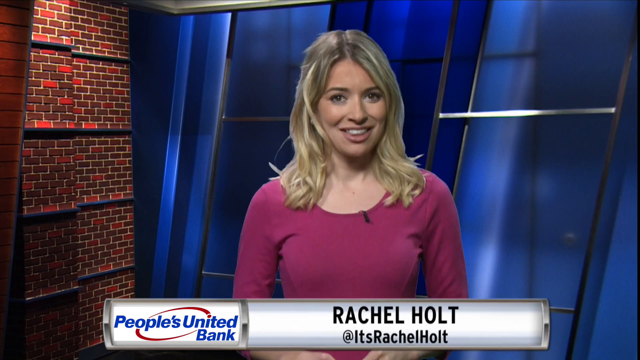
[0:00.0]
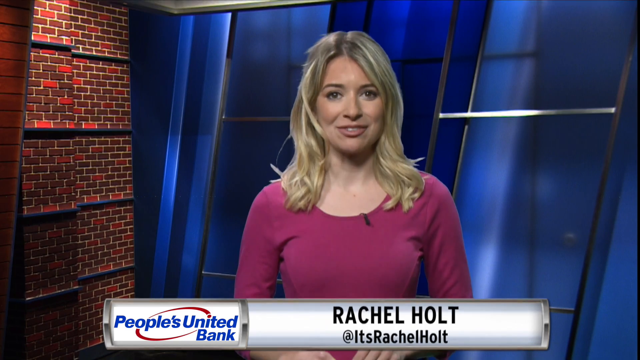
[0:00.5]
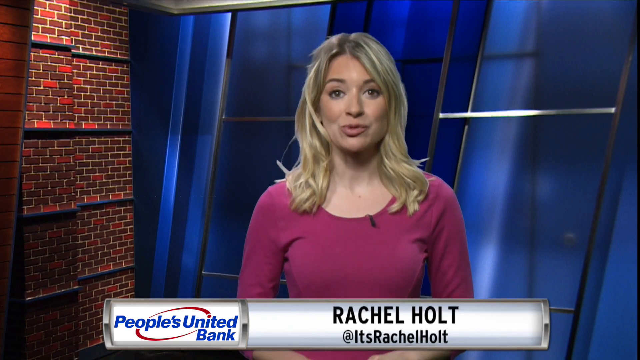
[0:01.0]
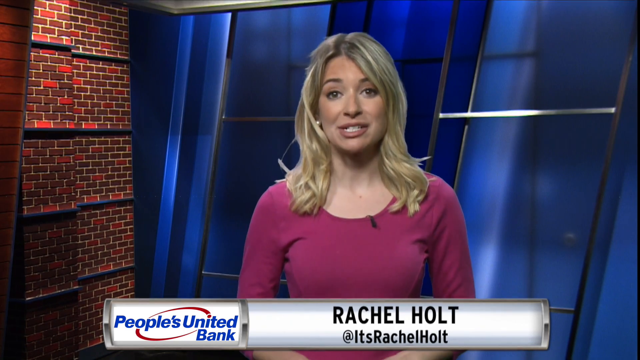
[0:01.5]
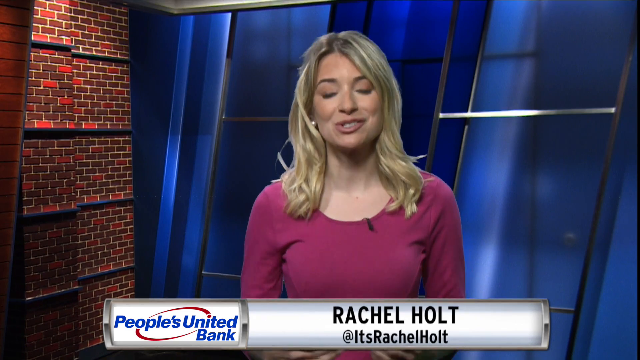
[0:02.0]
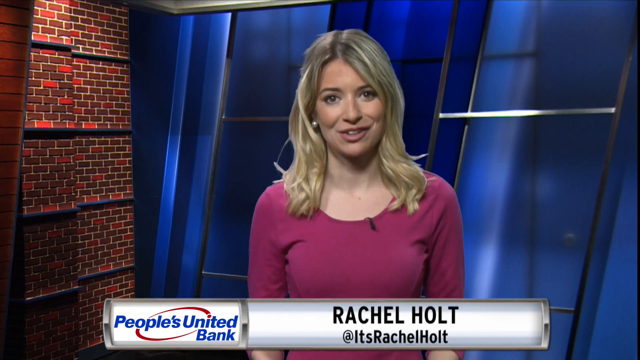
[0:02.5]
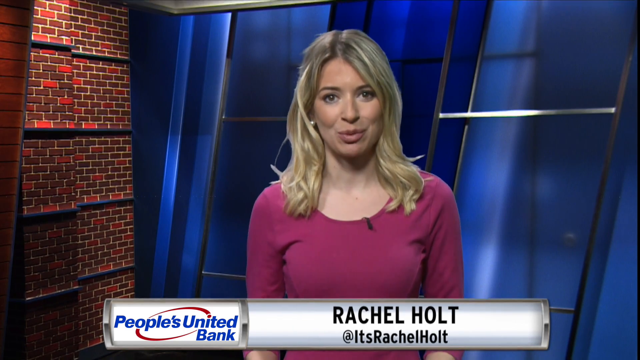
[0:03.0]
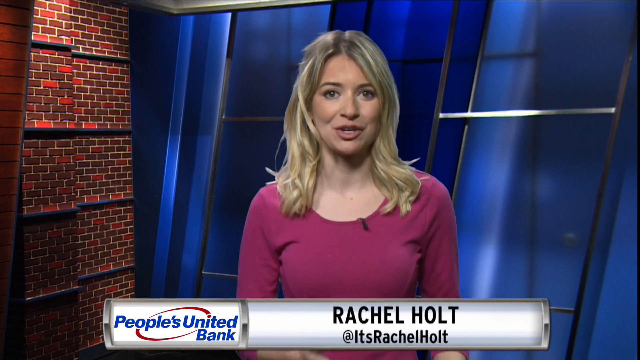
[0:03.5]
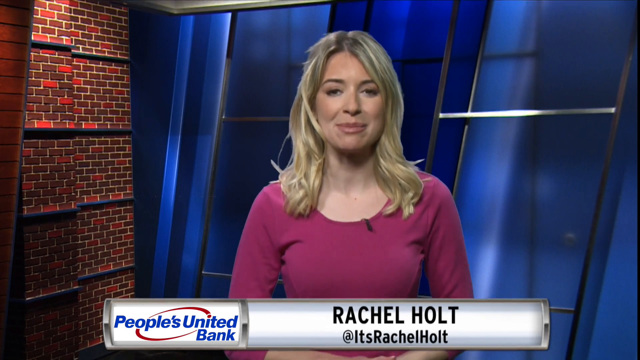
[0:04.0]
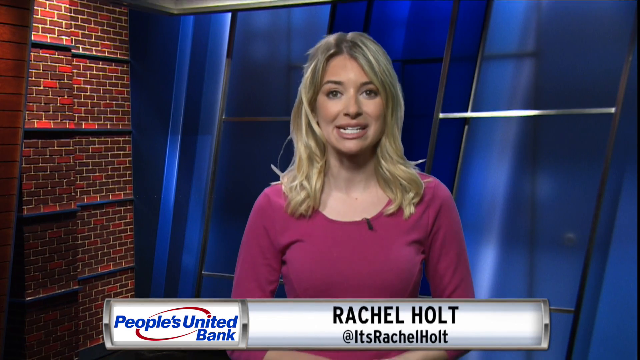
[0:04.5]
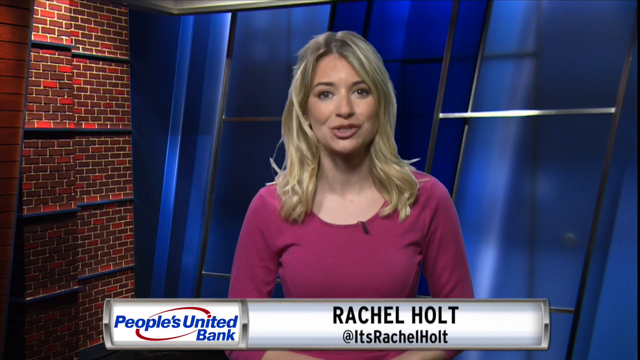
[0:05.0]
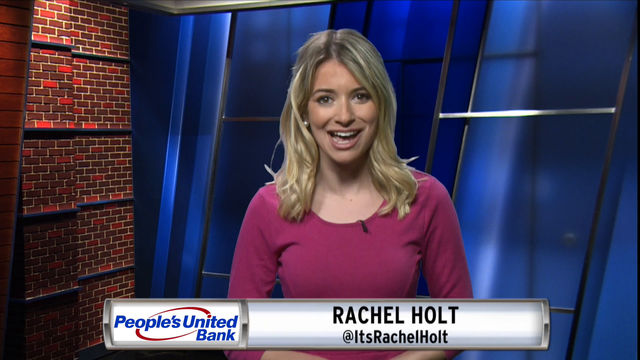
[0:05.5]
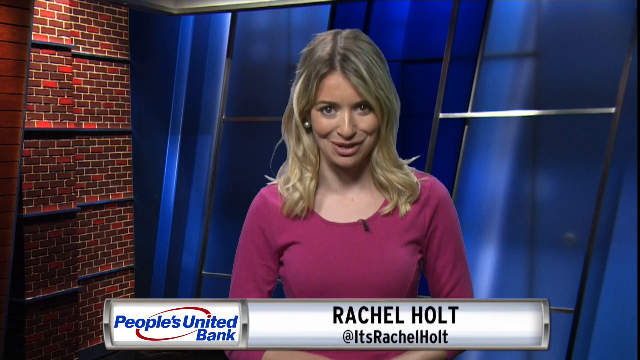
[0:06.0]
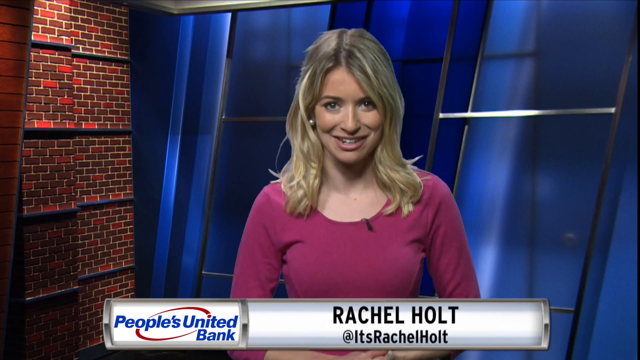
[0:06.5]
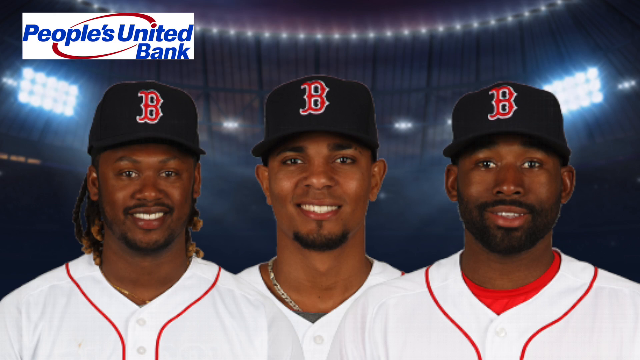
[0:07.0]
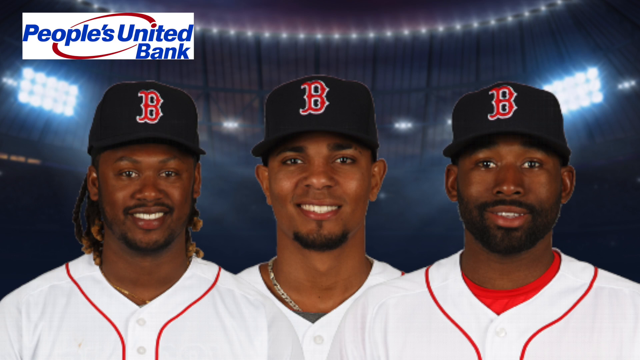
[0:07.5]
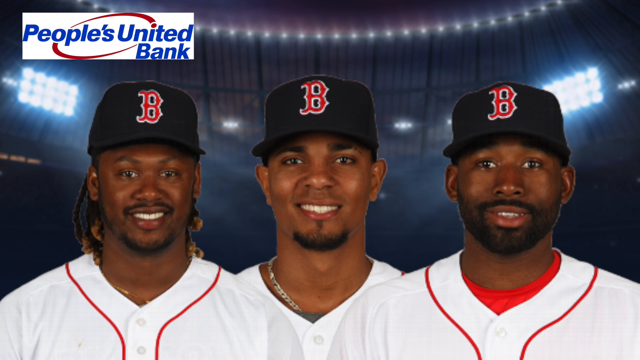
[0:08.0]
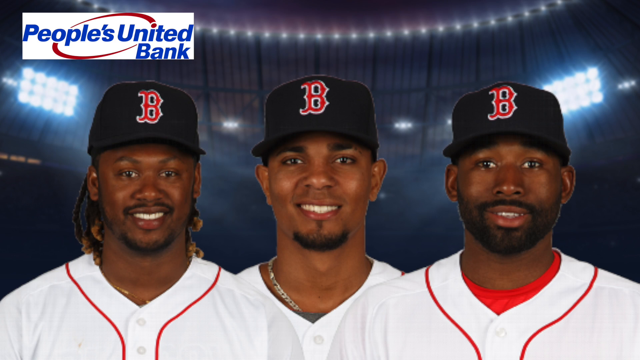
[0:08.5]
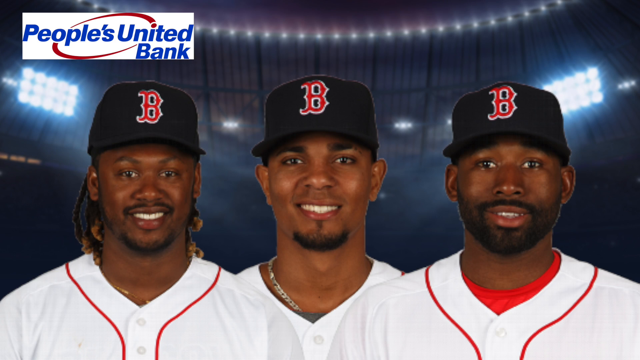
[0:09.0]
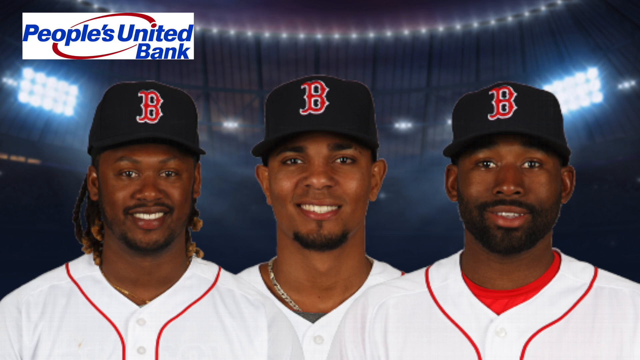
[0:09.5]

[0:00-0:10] A blonde woman with shoulder-length hair, brown eyes and dark eyebrows wears a pink shirt with a microphone attached to it. She seems to be a newscaster of some sort. A white banner under her gives her name, "Rachel Holt", along with her Twitter username, "@itsRachelHolt". To the left of the white banner is the text "People's United Bank". She nods enthusiastically while telling the news. The video then cuts to three men who seem to be baseball players. They might play for the Barons, judging by the red B on their black baseball caps. All three are black men who seem to be in their mid-20s to mid-30s, wearing white jerseys with red lining. They all have facial hair, and two of them wear necklaces, one silver and one gold. Behind them is a big stadium with lots of lights. In the top left corner is another logo reading "People's United Bank", with a white background, blue font and a red circle around it.